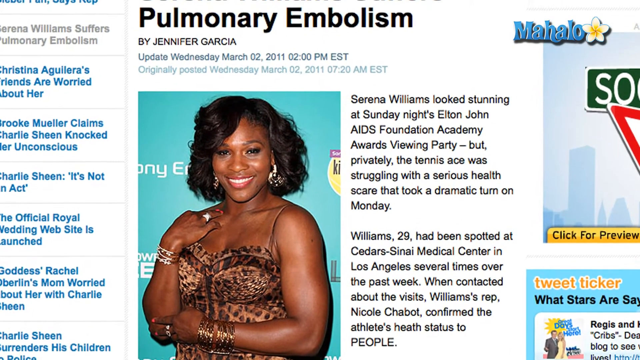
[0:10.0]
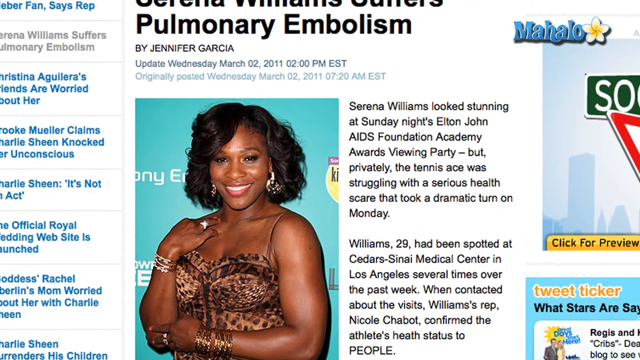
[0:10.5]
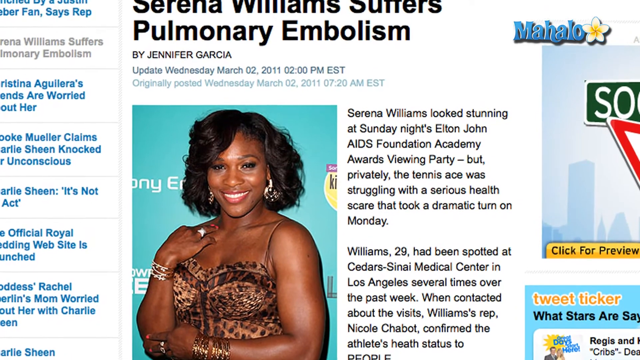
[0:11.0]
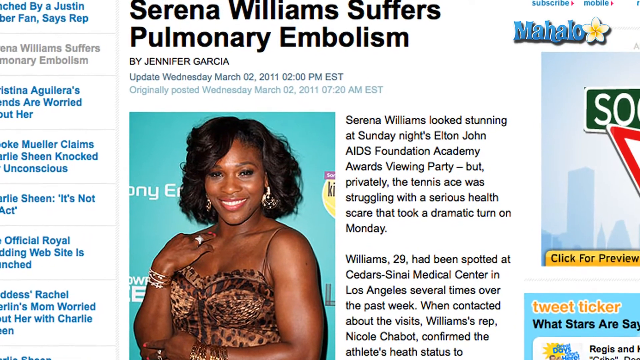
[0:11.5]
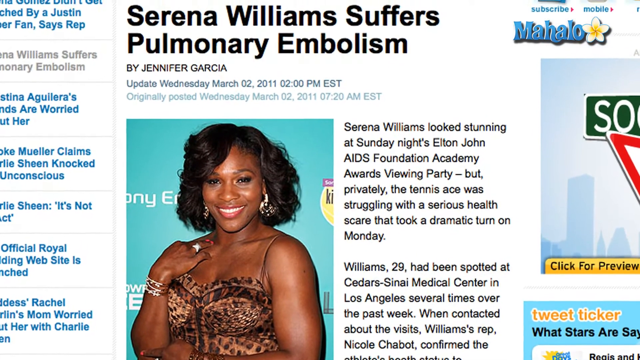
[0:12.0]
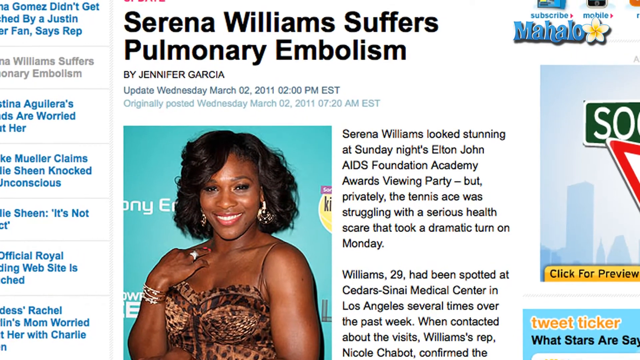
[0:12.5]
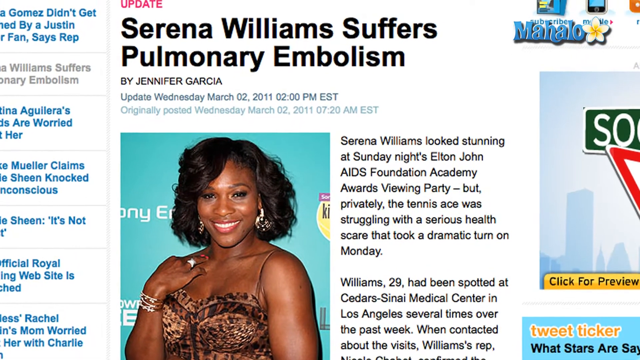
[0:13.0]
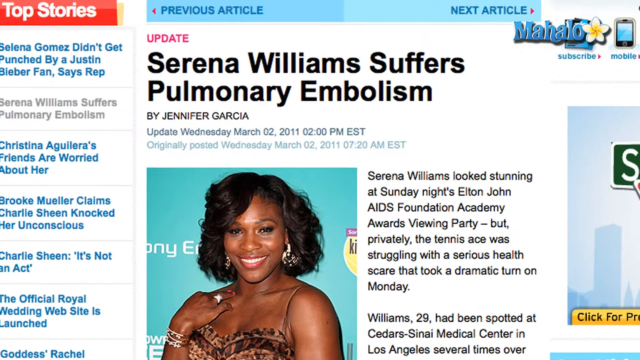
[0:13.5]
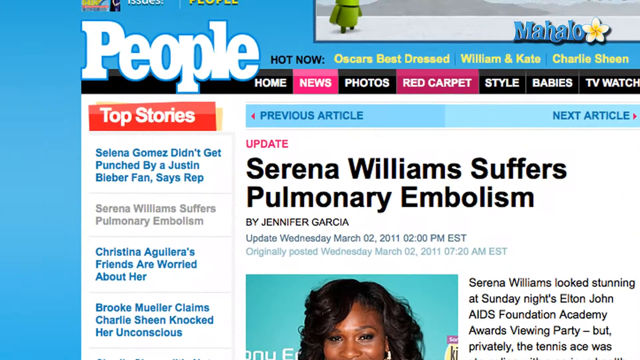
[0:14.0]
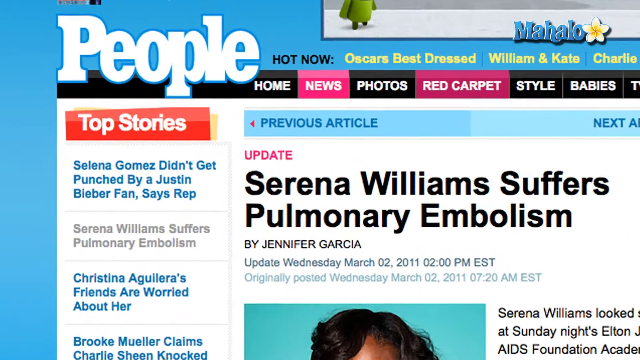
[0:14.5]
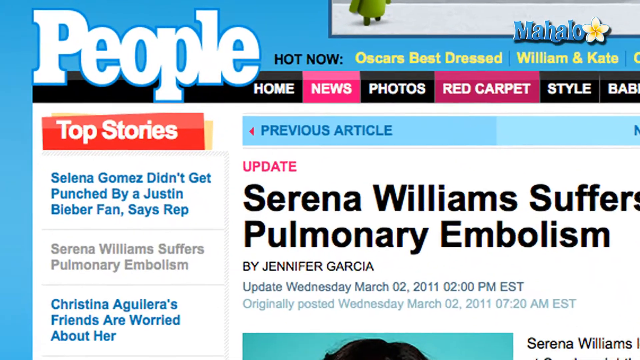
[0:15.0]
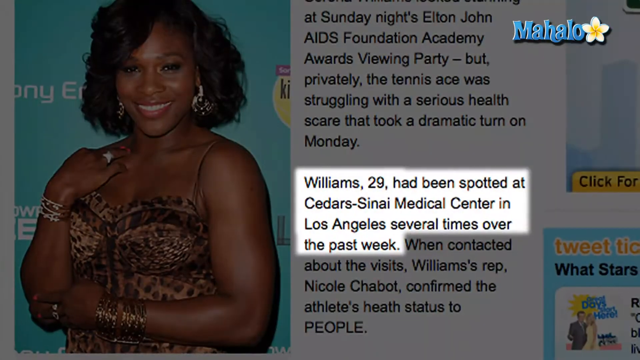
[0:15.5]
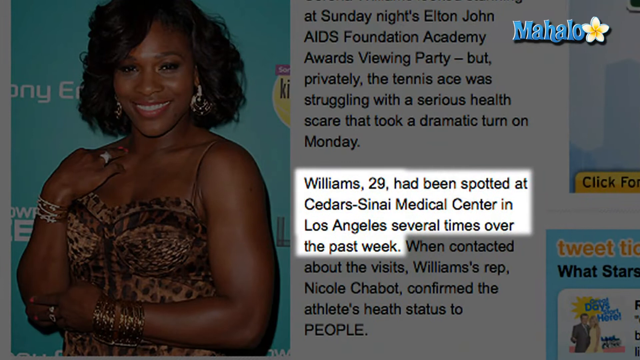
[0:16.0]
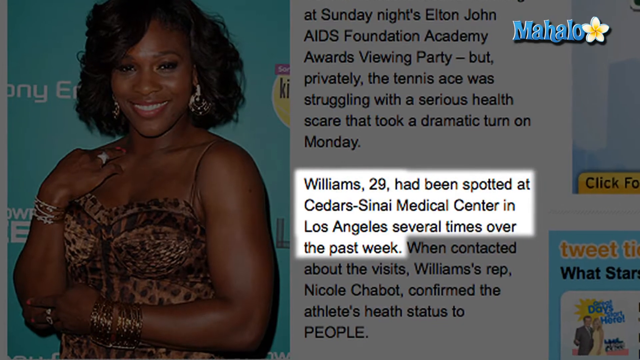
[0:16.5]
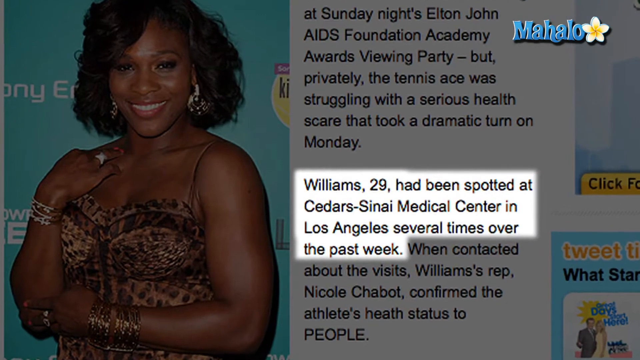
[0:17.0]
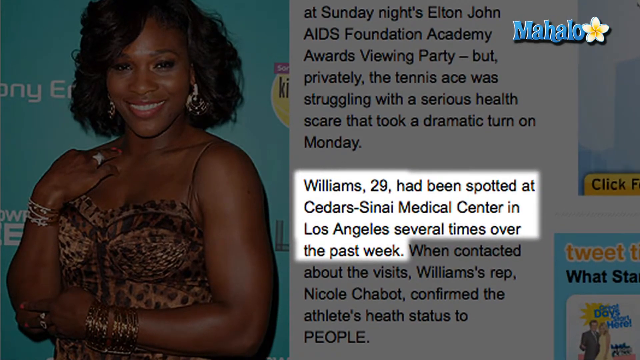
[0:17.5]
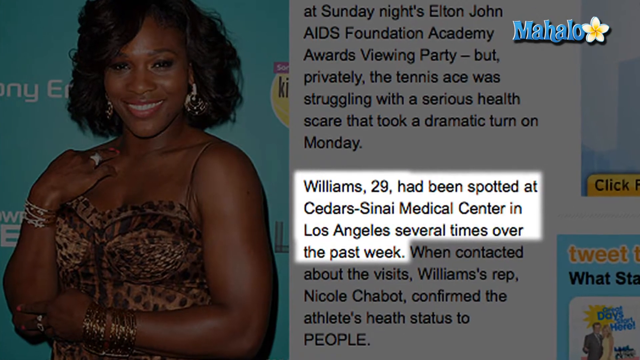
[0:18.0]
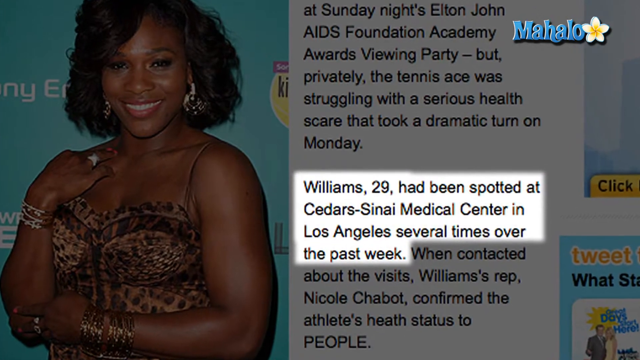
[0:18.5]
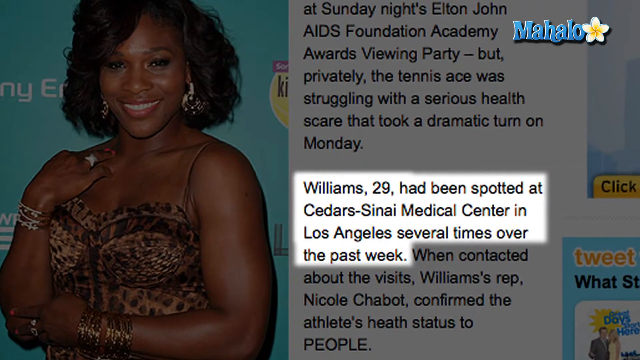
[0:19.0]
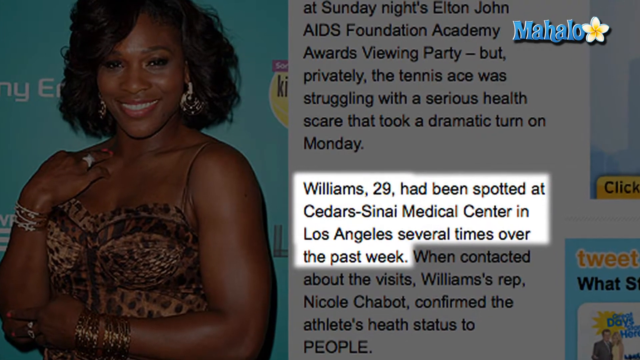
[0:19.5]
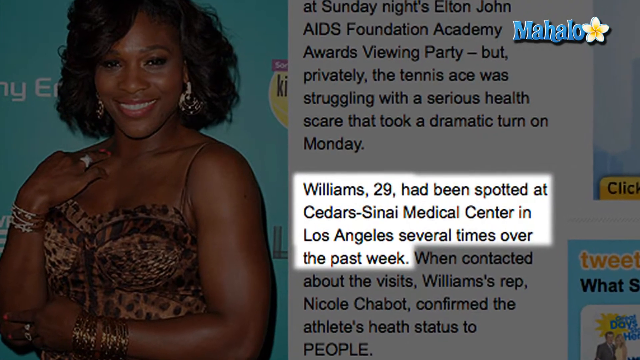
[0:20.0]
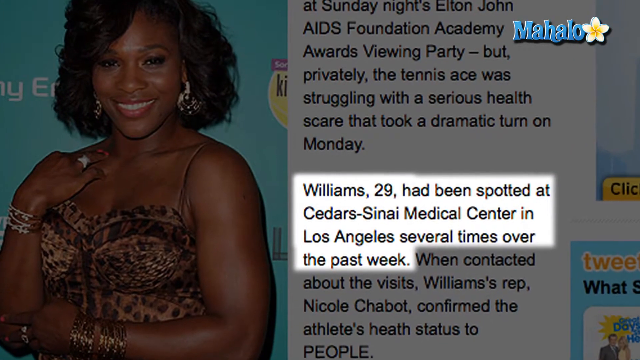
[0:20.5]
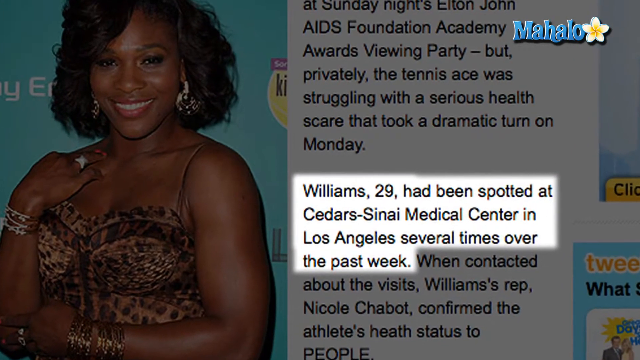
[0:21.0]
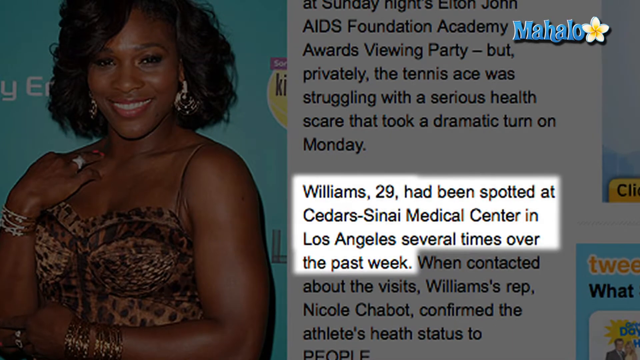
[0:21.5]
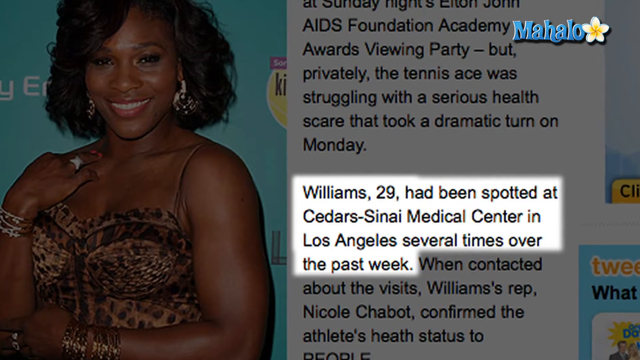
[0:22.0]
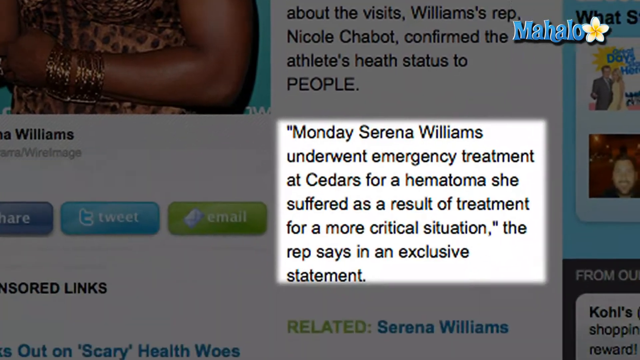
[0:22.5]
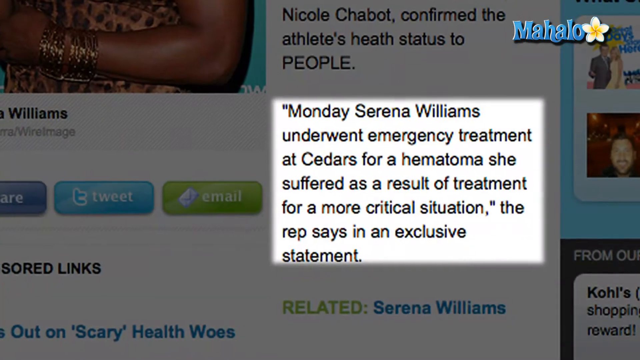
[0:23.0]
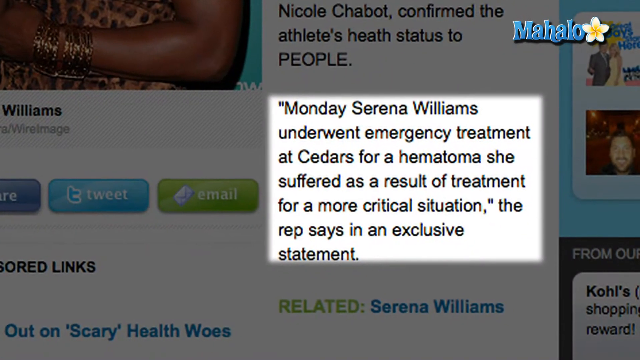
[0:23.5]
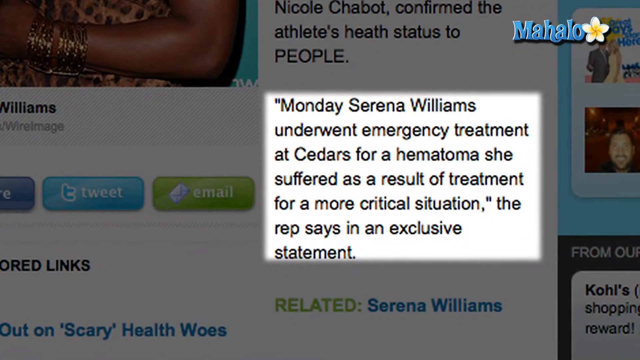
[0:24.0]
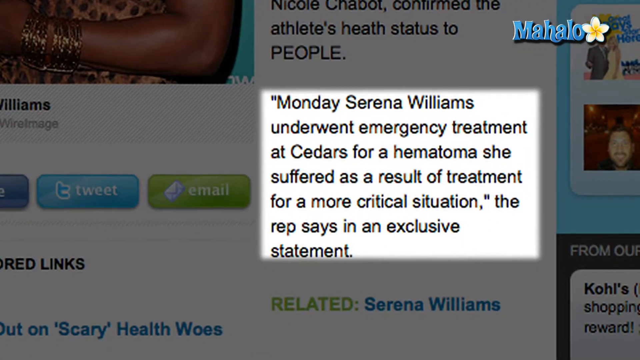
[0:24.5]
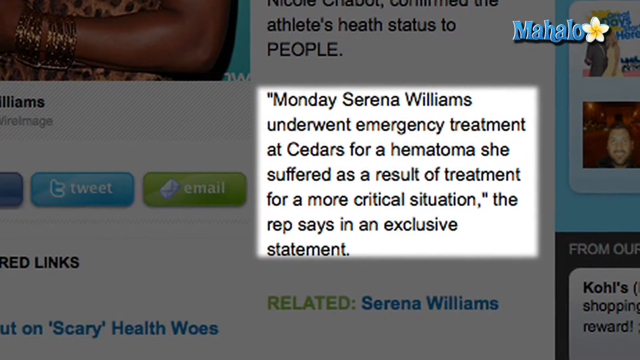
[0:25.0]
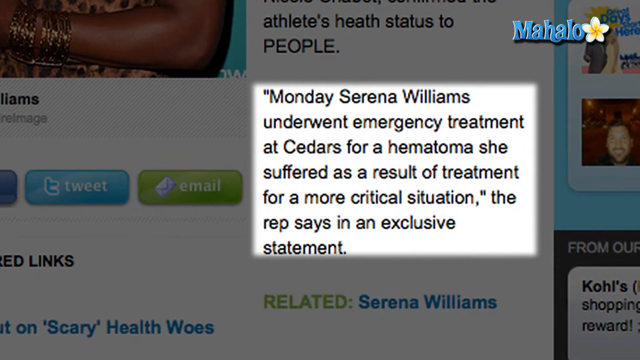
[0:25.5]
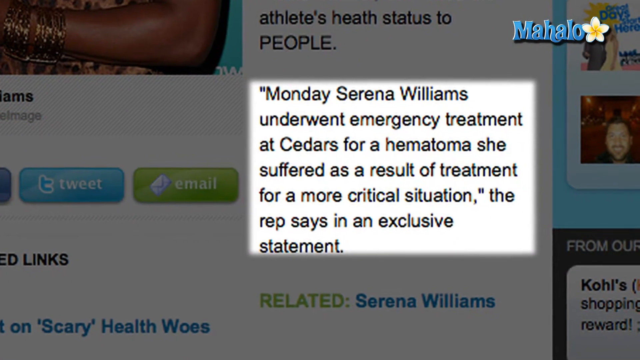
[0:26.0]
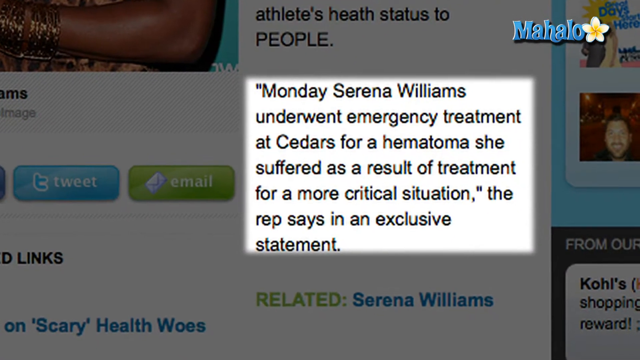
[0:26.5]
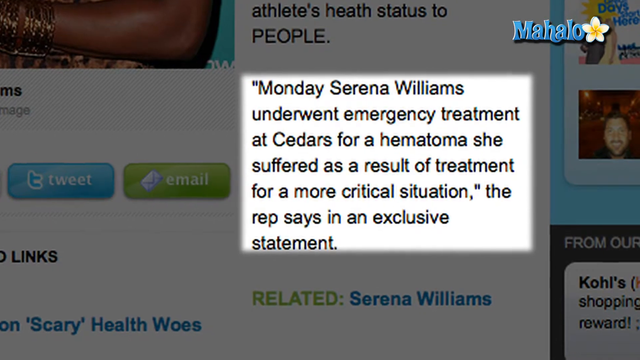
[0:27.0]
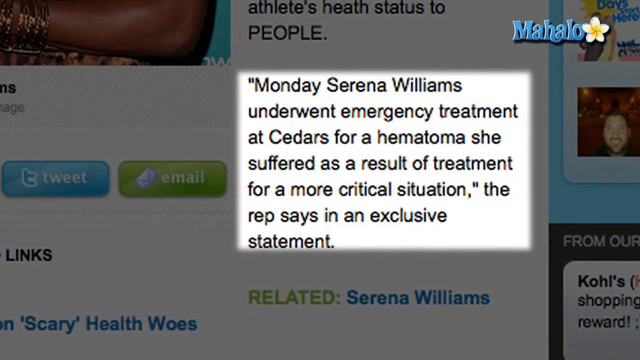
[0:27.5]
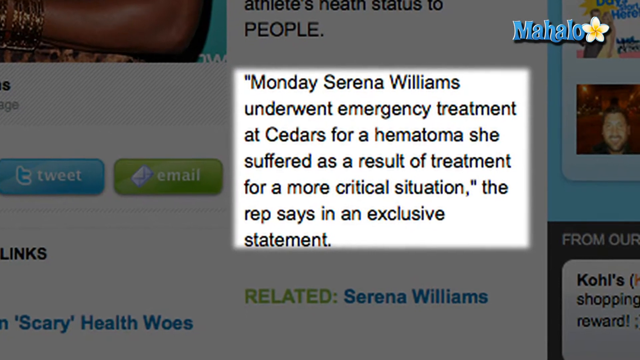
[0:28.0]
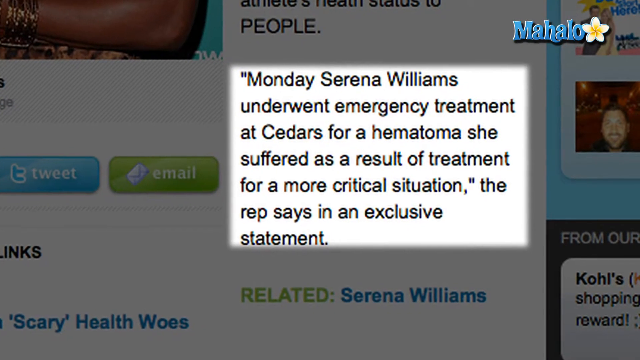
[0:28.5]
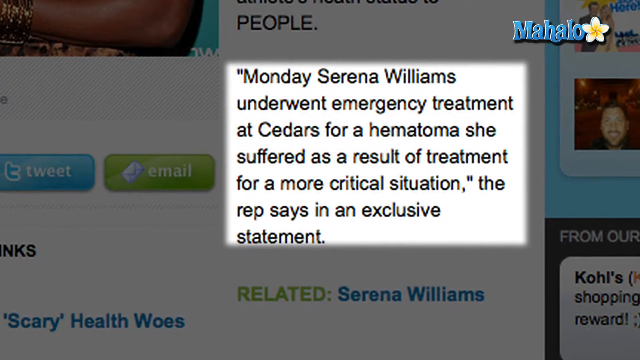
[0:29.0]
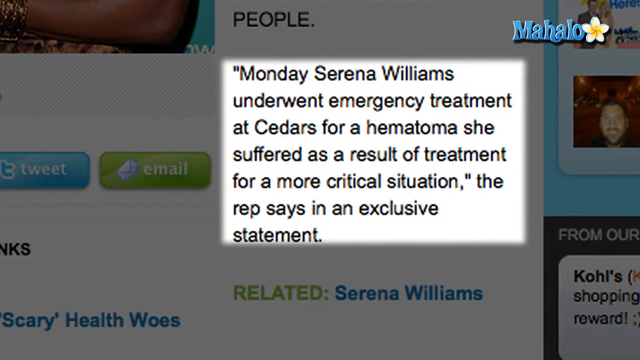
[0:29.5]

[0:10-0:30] The Mahalo article about a pulmonary embolism by Jennifer Garcia continues. The next part reads: "Williams 29 had been spotted at Cedars-Sinai Medical Center in Los Angeles several times over the past week. When contacted about the visits, Williams' representative Nicole Chabot confirmed the athlete's health status to People. Monday, Serena Williams underwent emergency treatment at Cedars for a hematoma. She suffered as a result of treatment for a more critical situation. The representative said in an exclusive statement." The article continues with more details.